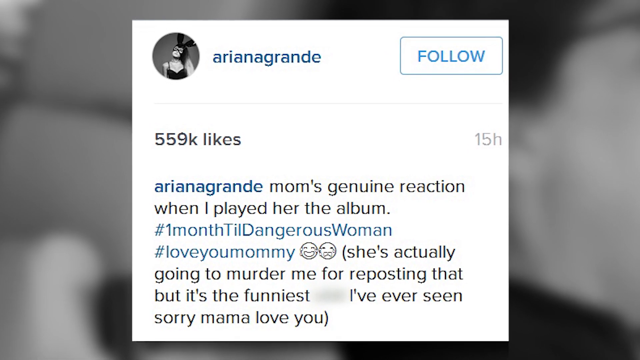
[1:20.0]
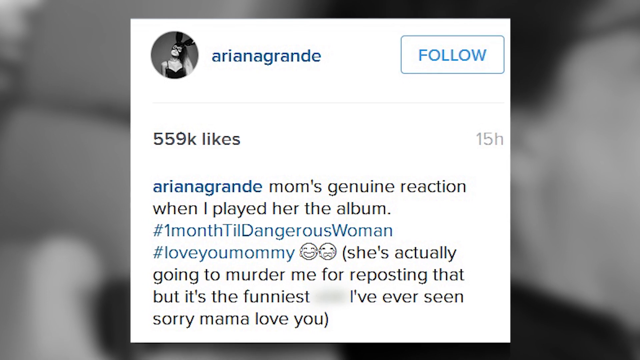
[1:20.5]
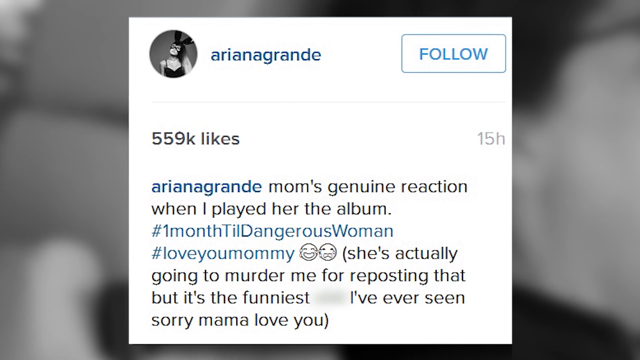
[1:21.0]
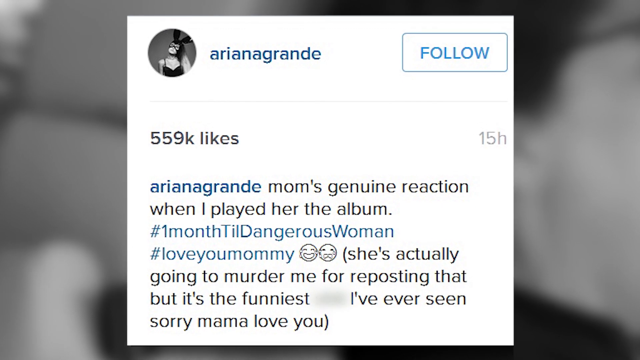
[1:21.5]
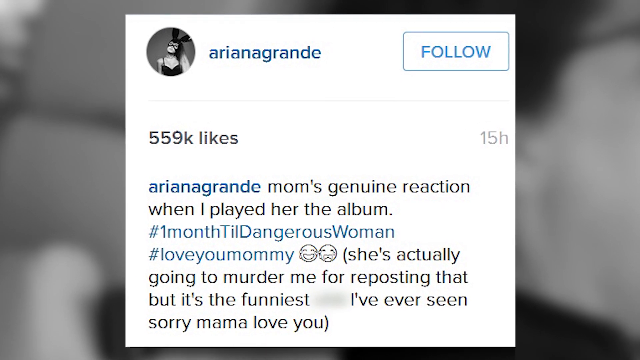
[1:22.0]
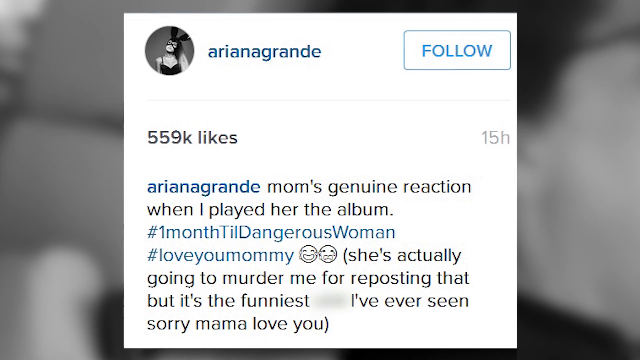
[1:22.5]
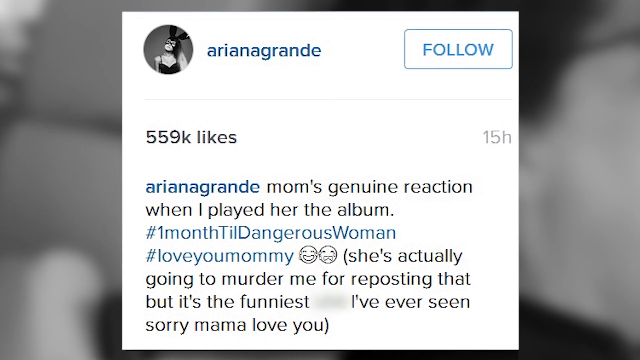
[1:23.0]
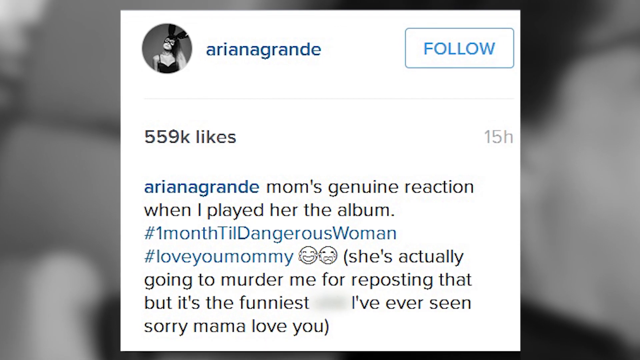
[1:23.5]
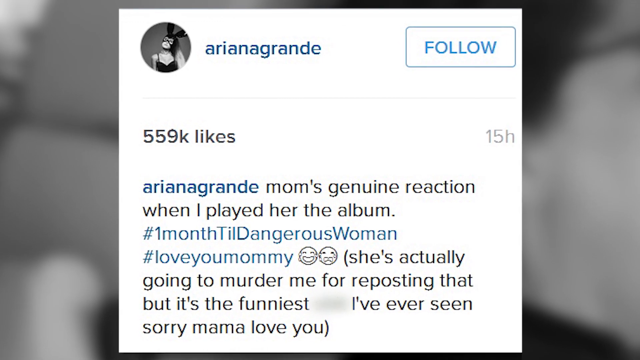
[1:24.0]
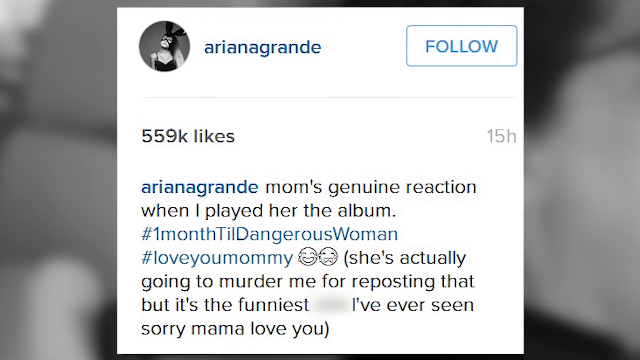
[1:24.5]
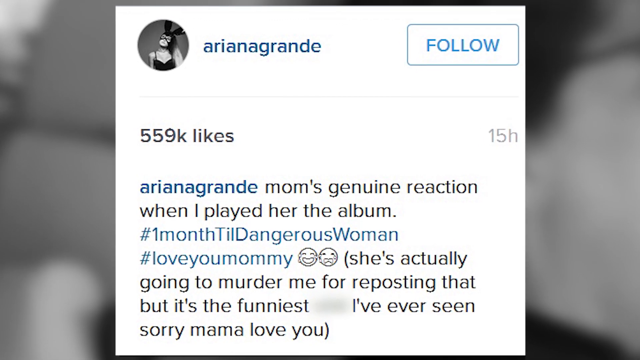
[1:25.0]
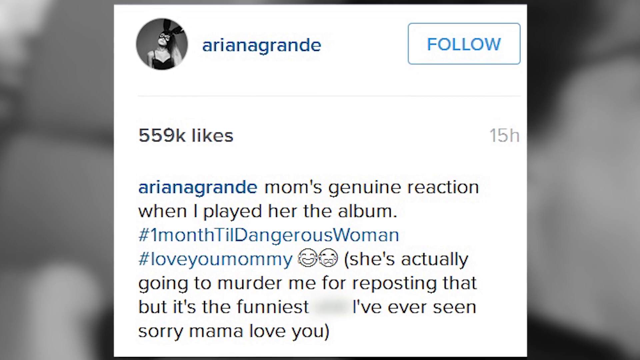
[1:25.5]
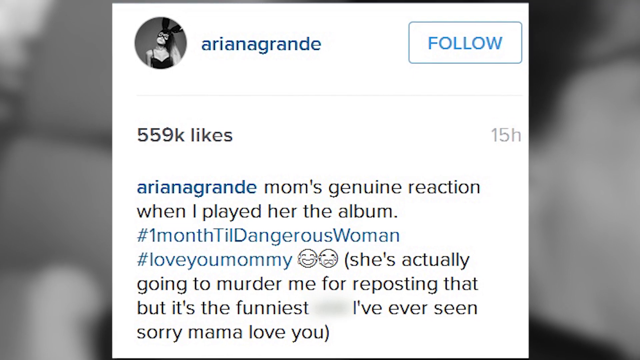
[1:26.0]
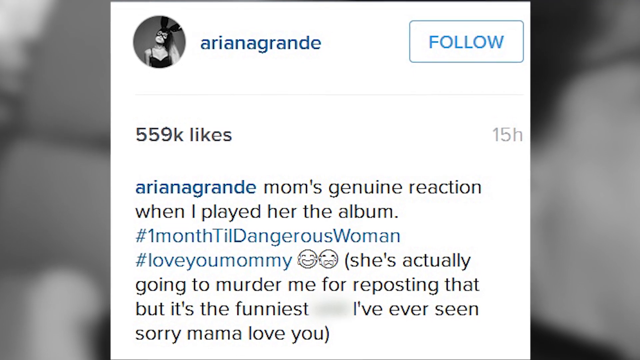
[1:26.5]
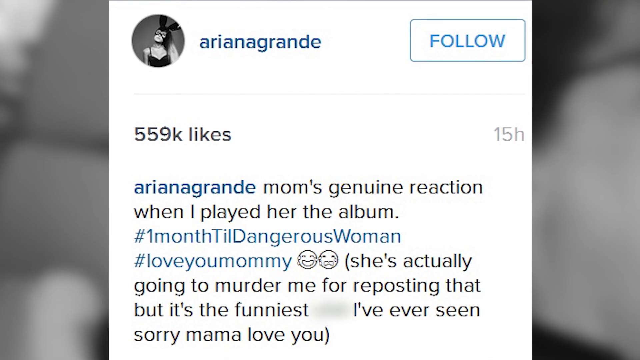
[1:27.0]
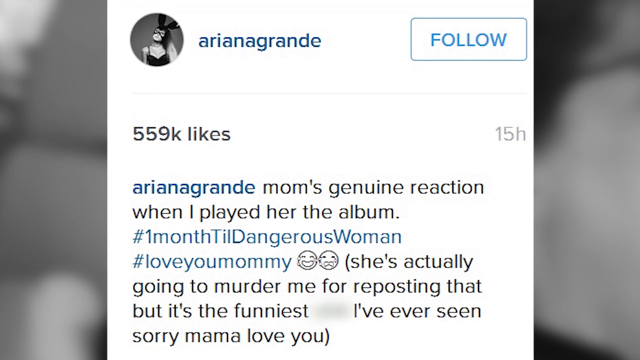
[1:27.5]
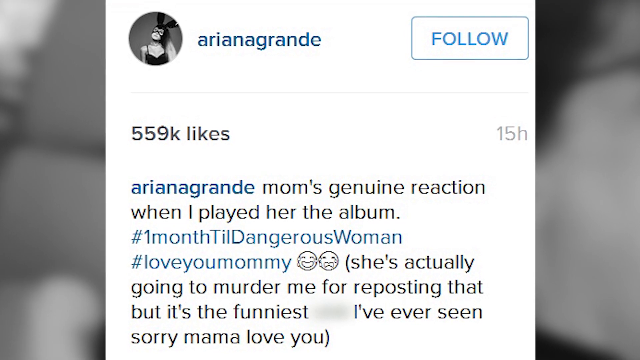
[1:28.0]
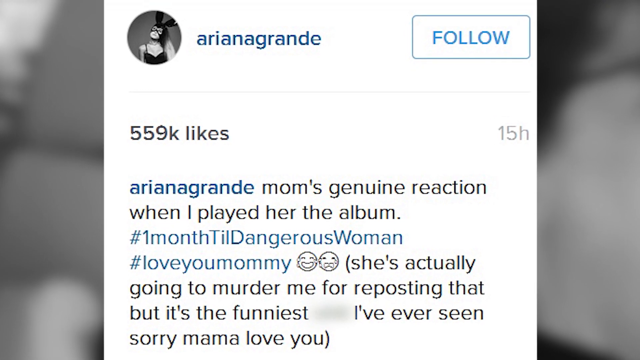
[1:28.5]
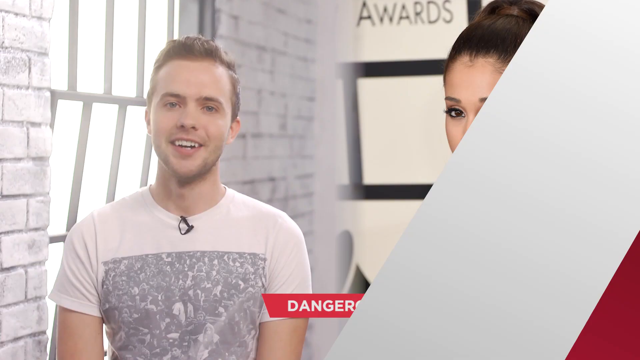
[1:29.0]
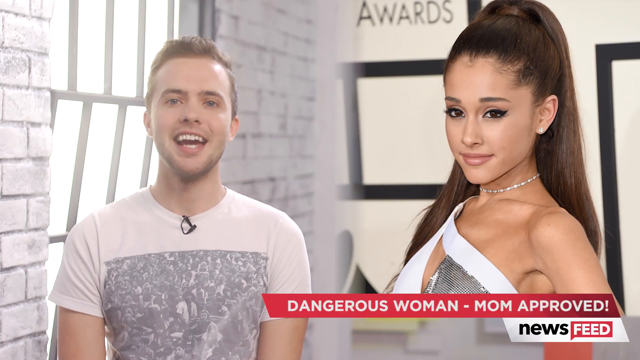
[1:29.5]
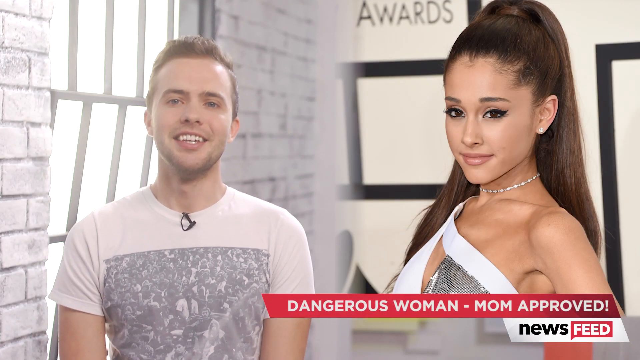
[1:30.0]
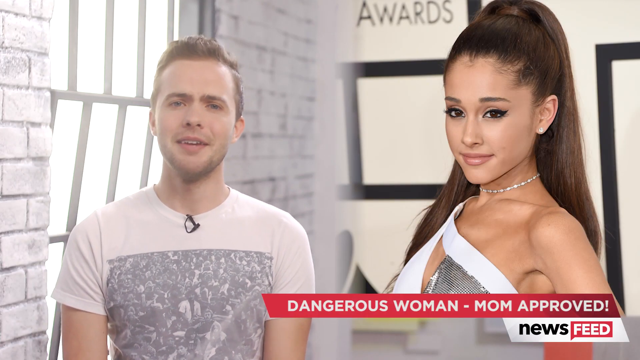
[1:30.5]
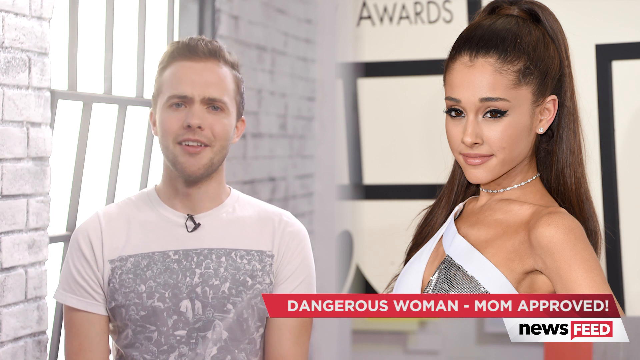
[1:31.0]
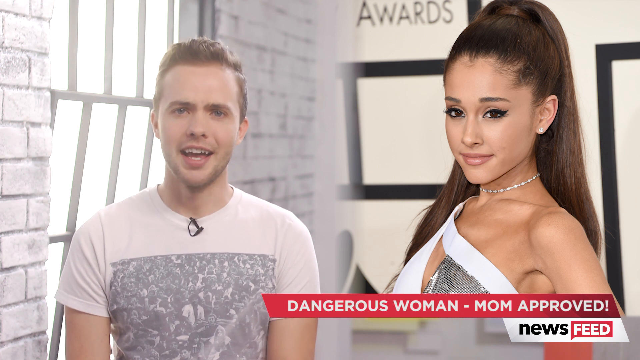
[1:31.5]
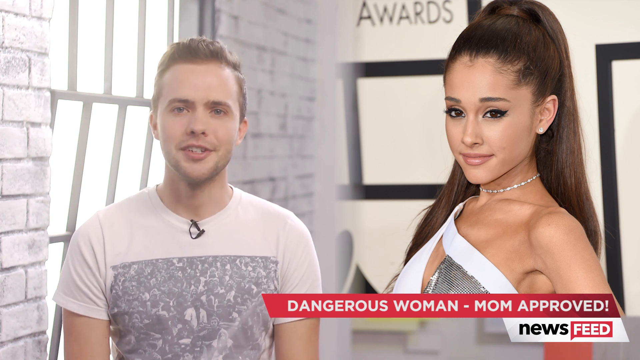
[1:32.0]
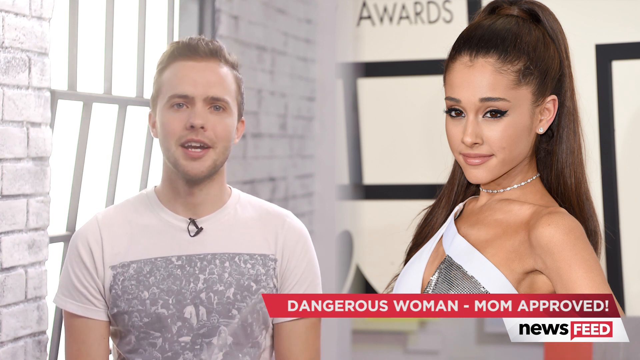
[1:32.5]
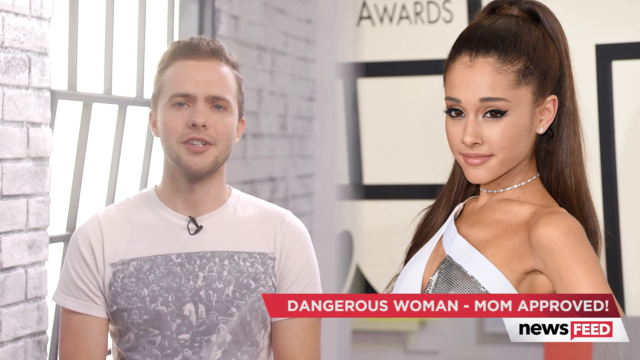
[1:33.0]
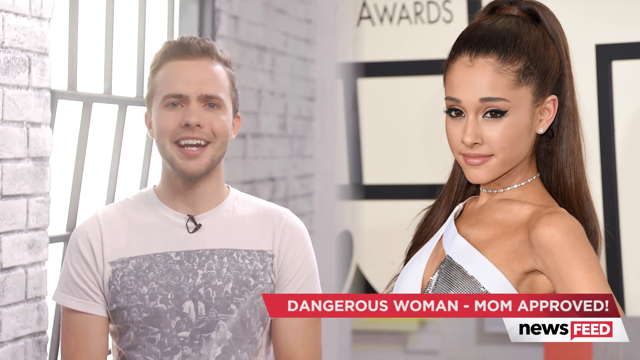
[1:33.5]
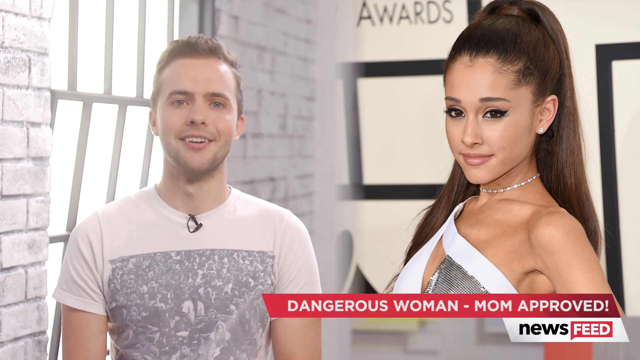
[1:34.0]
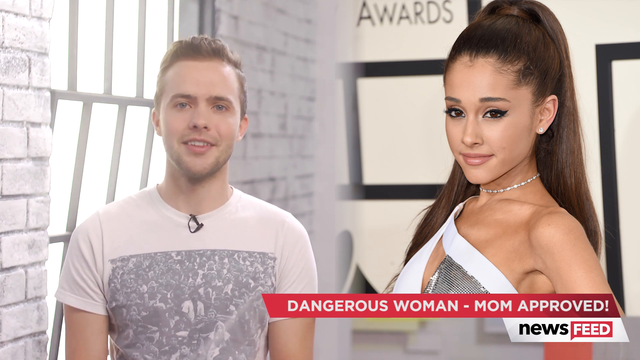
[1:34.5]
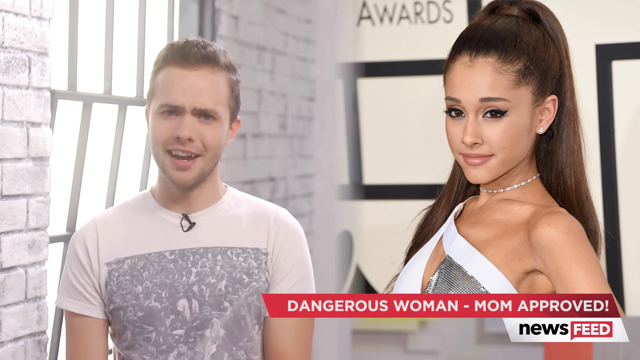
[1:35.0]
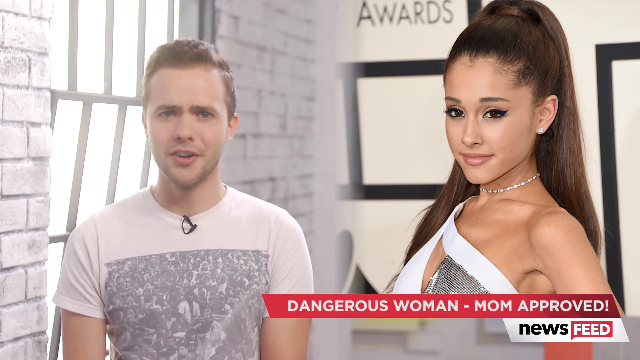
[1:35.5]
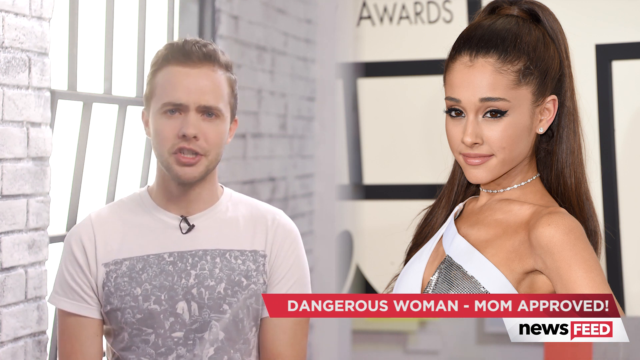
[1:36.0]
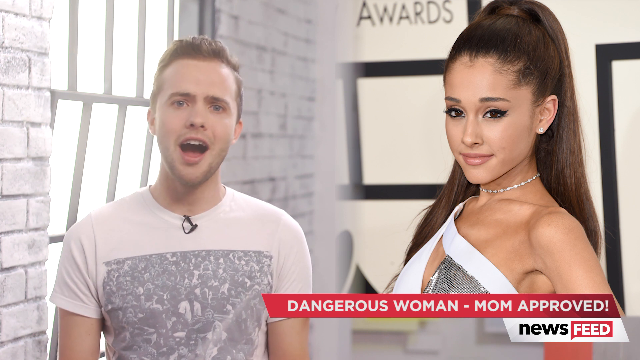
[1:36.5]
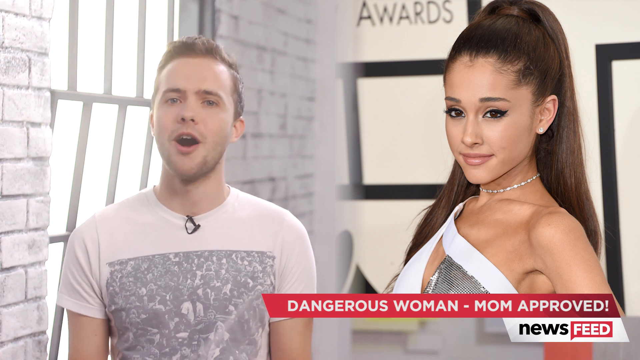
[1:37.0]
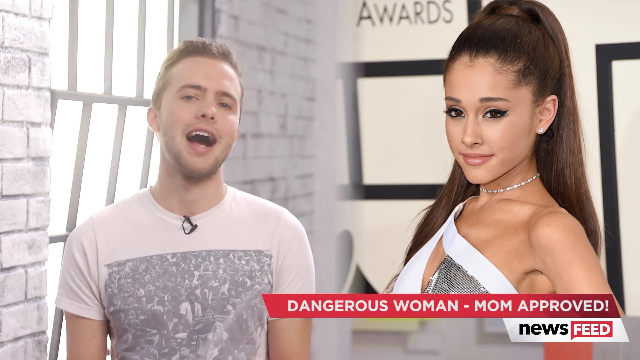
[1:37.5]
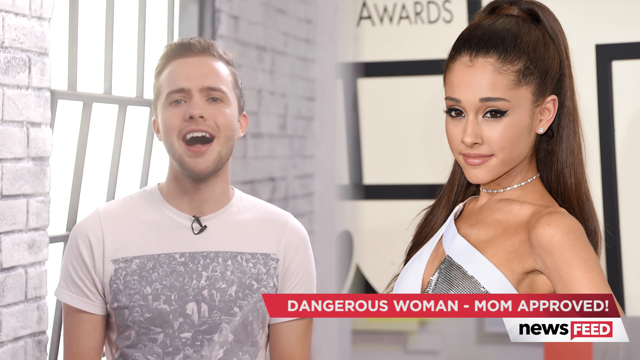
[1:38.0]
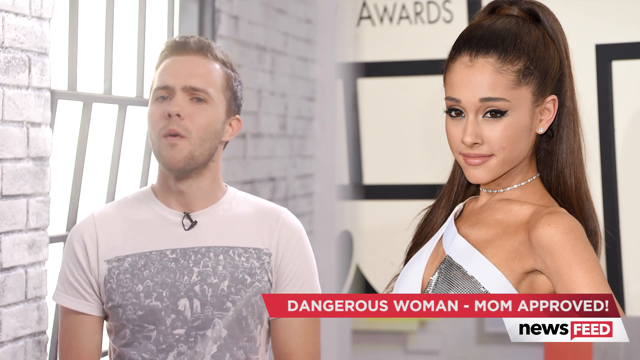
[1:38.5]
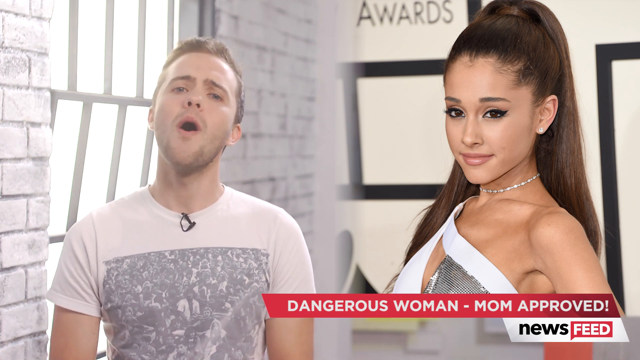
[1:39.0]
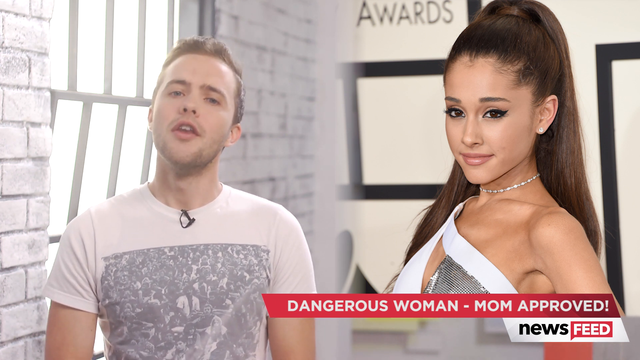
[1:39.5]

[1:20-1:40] Against a background of blurry gray and white images, the center shows what looks like a phone or iPad screen displaying a social media post by Ariana Grande. Her profile image in the upper left corner shows her wearing a black leather mask with rabbit ears and a black top, and her name, "Ariana Grande", is written in blue text. A follow button is in the upper right corner. Below, black text reads "559,000 likes", and the post was made 15 hours ago. The post reads "Ariana Grande's mom's genuine reaction when I played her the album. #one month till dangerous women. #love you mommy", followed by a parenthetical reading "she's actually going to murder me for reposting that but it's the funniest I've ever seen. Sorry, sorry mama, love you." The camera scrolls in closer, and the video returns to the show's host, with an image of Ariana to his right, talking toward the camera.